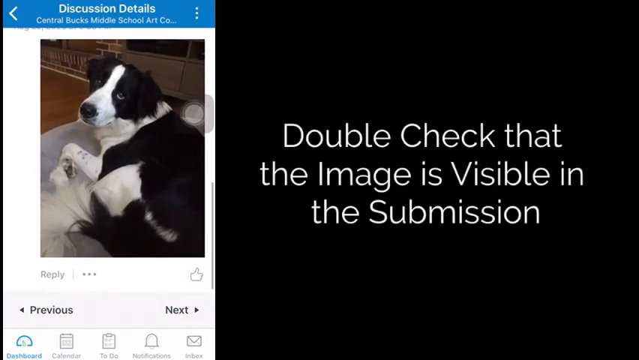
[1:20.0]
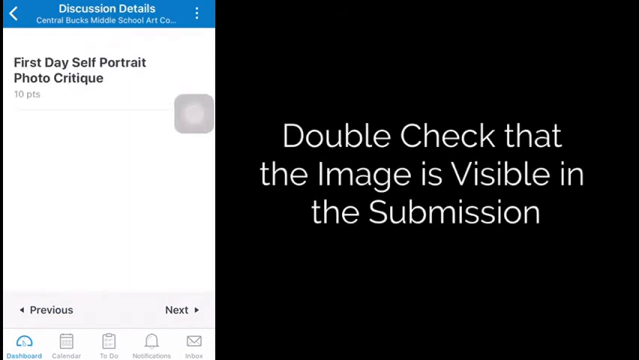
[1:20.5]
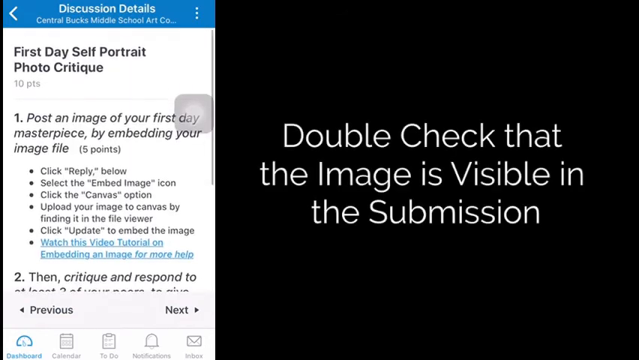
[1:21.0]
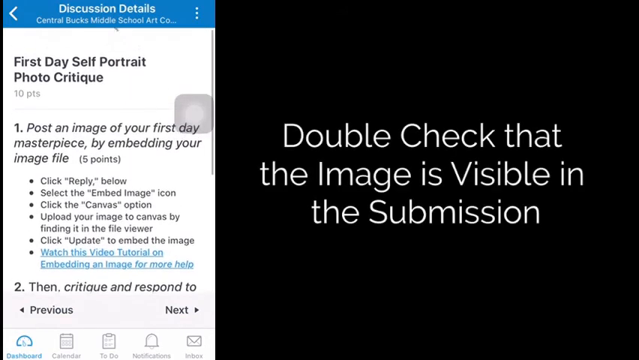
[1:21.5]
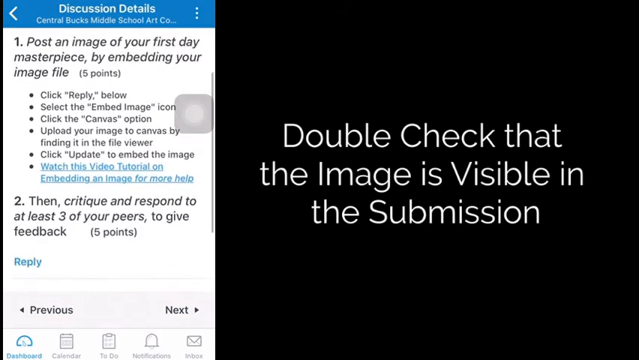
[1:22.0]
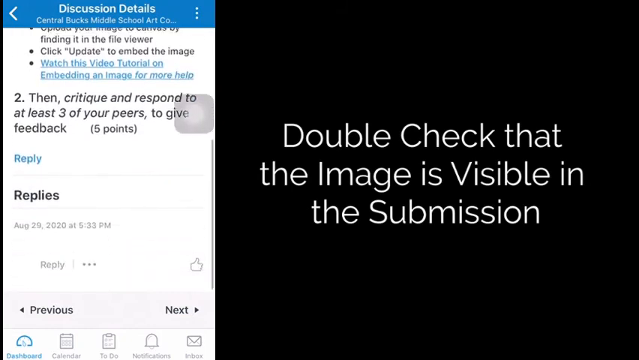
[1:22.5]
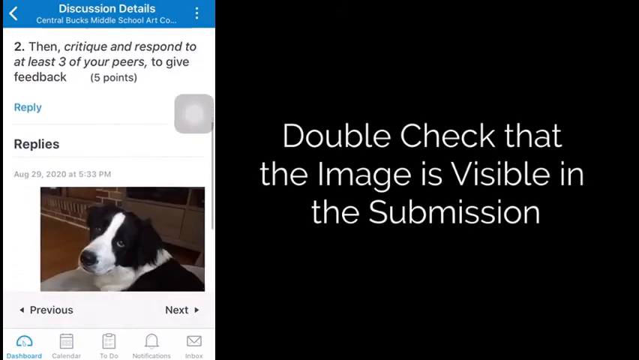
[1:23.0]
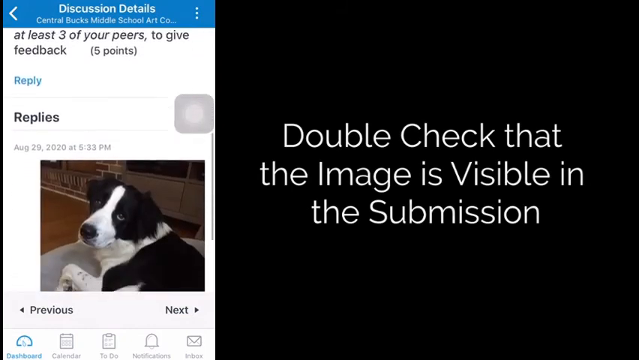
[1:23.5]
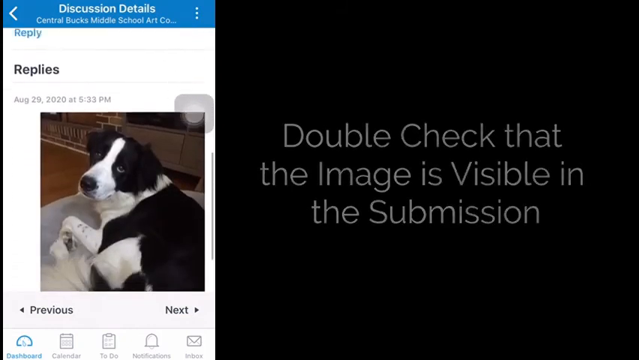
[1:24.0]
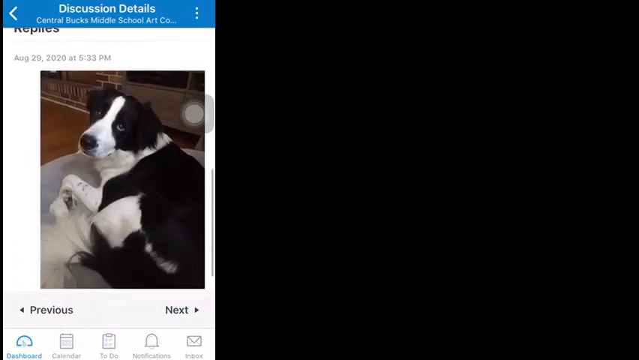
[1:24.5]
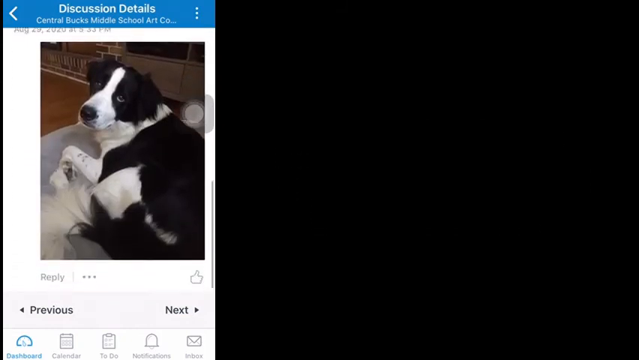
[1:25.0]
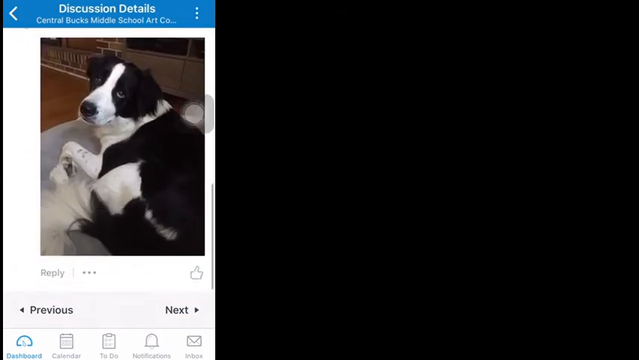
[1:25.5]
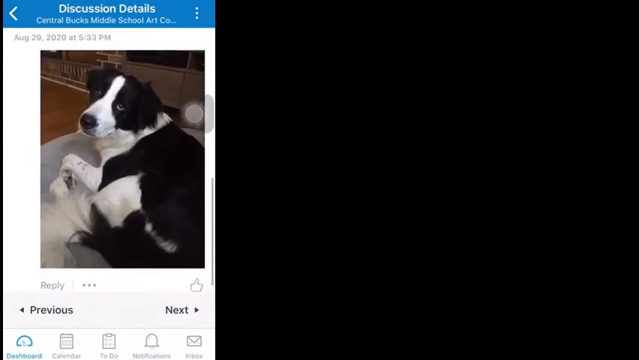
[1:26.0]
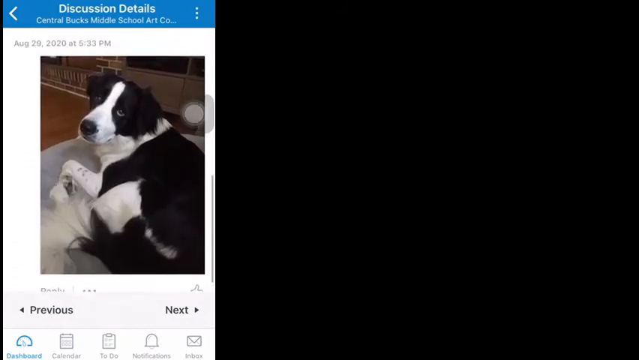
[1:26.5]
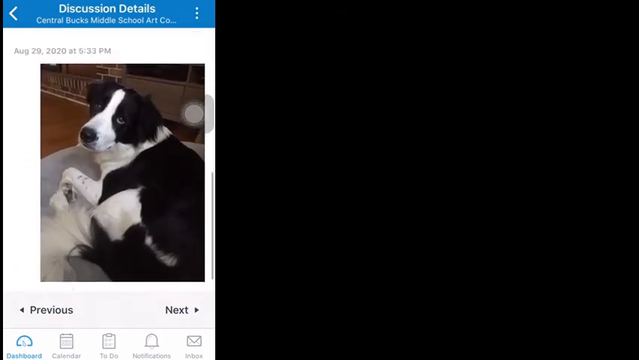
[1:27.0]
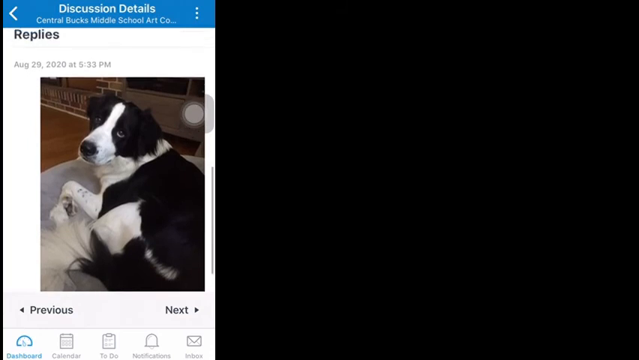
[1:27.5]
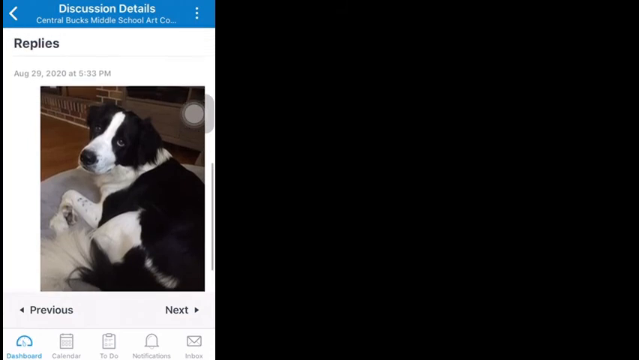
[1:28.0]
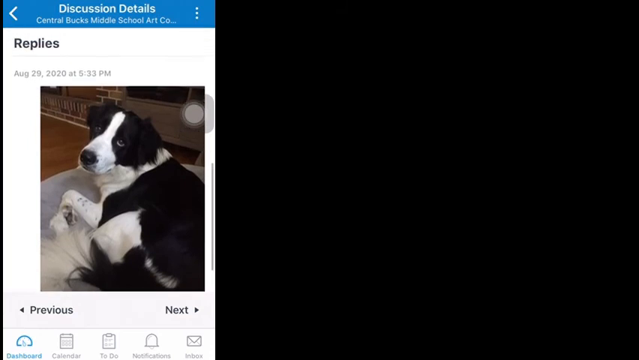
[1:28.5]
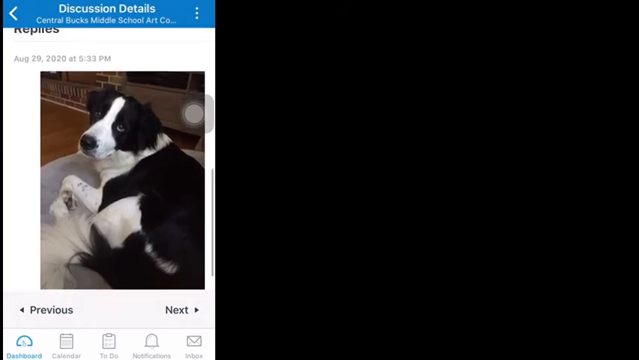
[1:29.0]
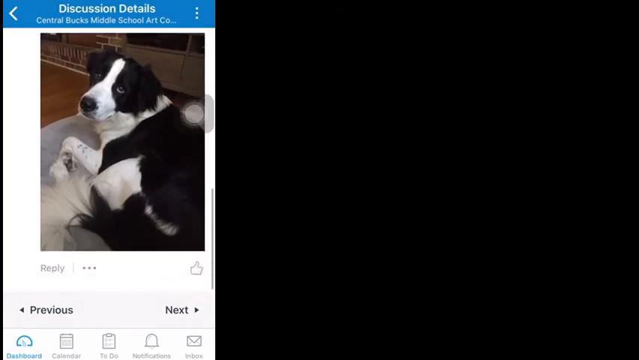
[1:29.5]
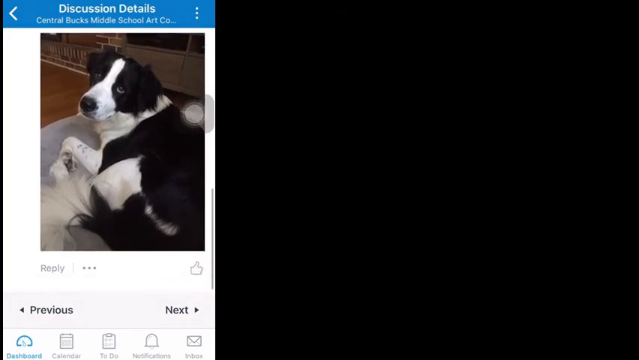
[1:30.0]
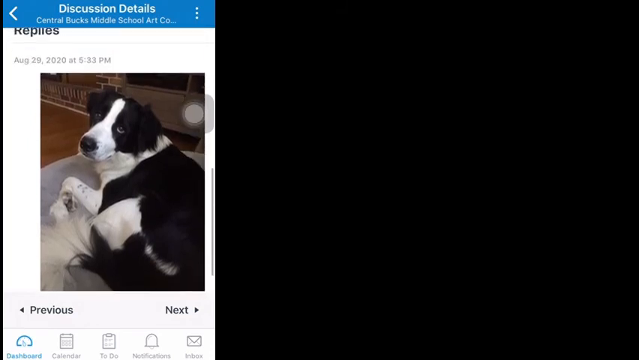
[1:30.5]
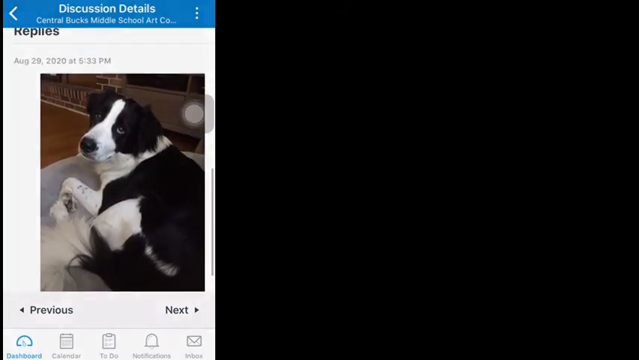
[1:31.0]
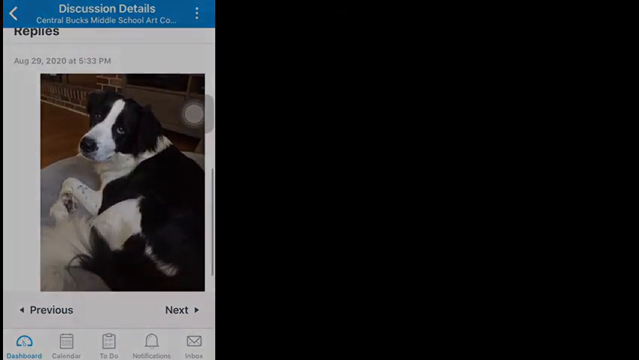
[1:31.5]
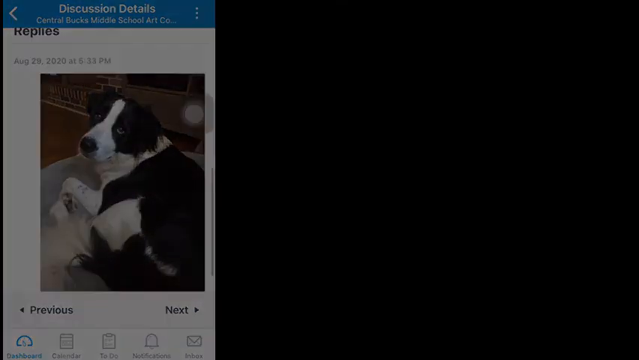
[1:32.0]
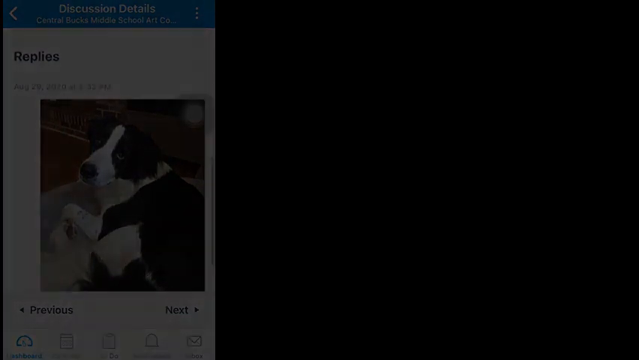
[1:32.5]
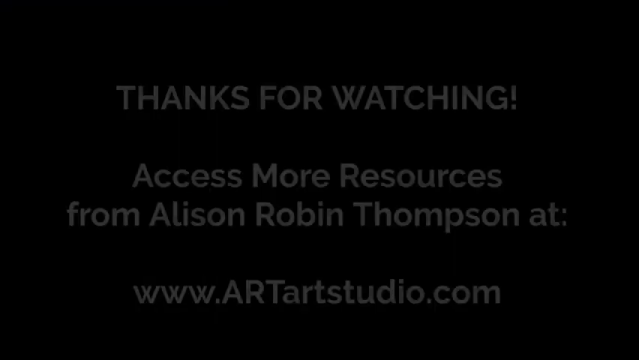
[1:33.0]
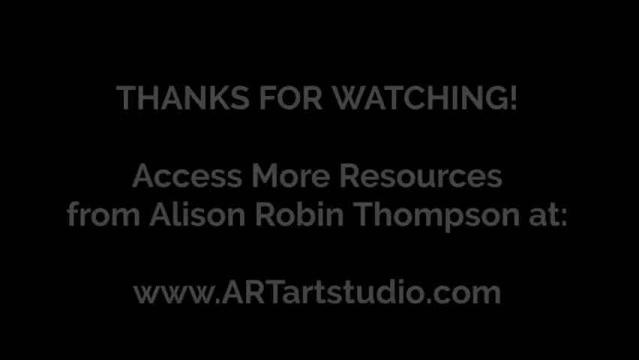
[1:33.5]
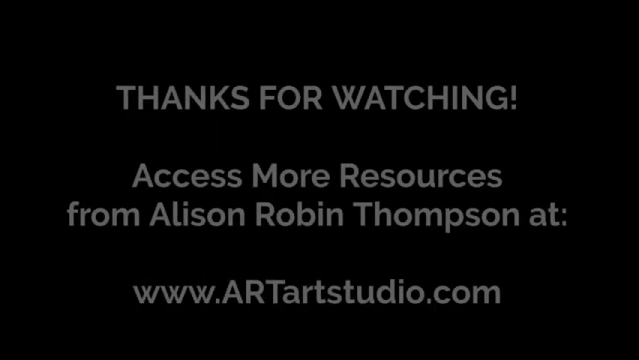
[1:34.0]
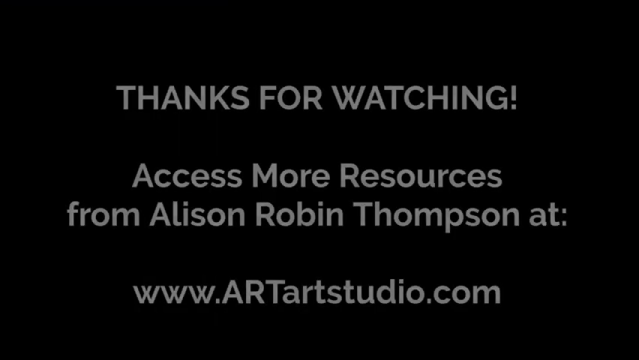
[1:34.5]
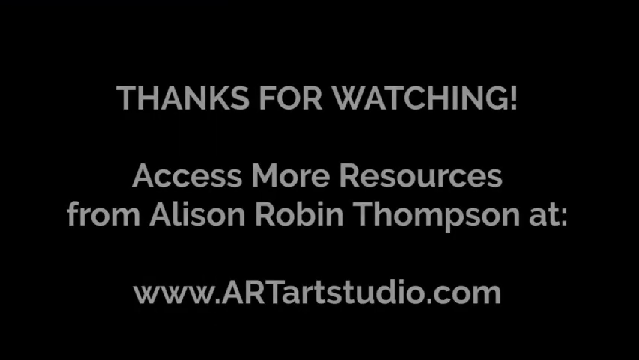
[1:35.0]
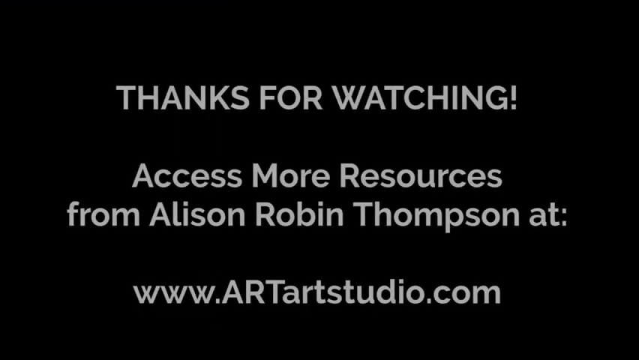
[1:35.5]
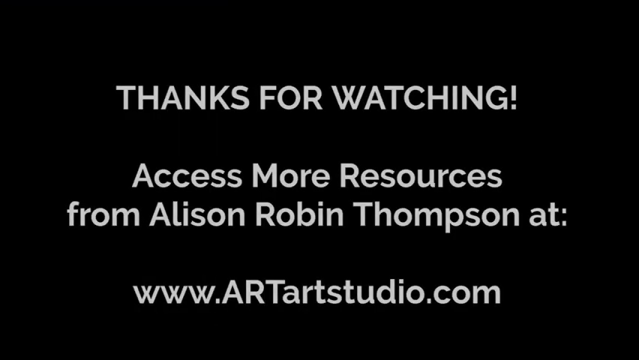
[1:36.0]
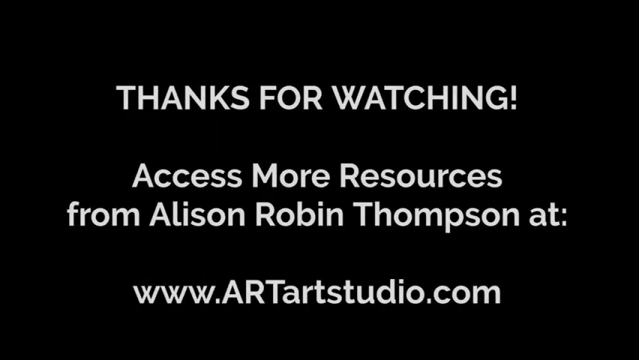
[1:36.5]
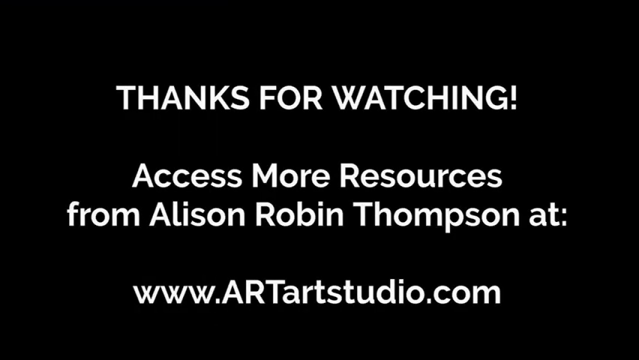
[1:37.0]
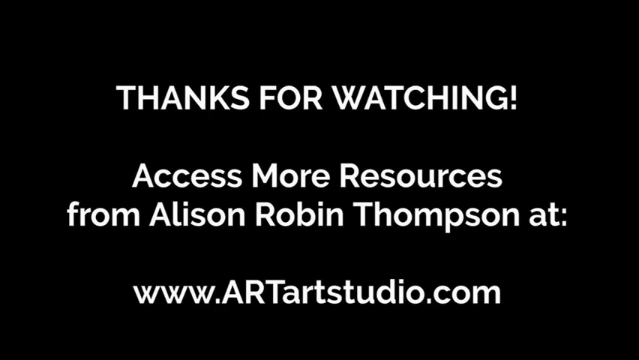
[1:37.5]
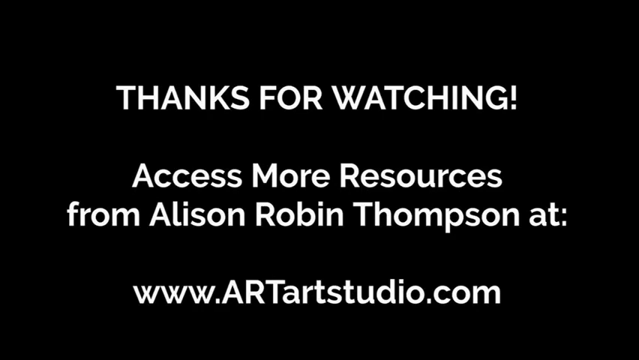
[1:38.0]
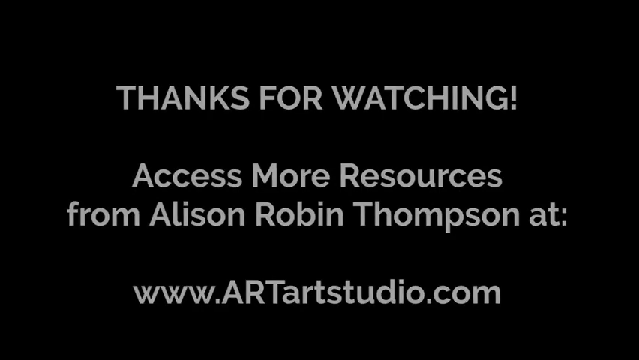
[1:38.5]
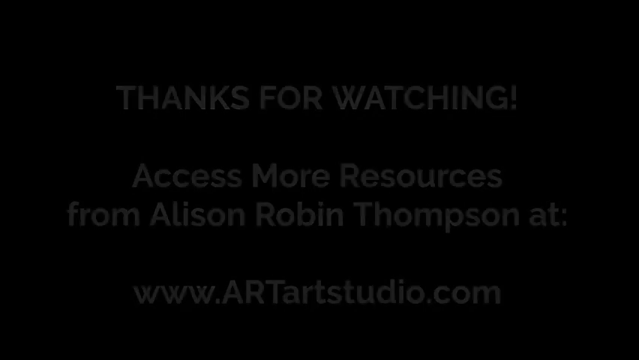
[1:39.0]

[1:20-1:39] At the bottom of the phone screen are the word "previous" with an arrow pointing left and "next" with an arrow pointing right, while the text on the right-hand black screen, in lighter font, still reads "double checked that the image is visible in the submission". At the top of the phone screen is the text "discussion details", below it "central bucks middle school art co..." with three dots in a vertical line on the right, and below that the puppy image. The phone screen goes back to the instructions and scrolls down to land on the puppy image in the replies. Then, on a black screen, text appears in lighter font, becoming lighter as it is watched: "THANKS FOR WATCHING!", followed by a line of space and, in slightly smaller font, "Access more resources from Alison Robin Thompson at www.ARTartstudio.com".